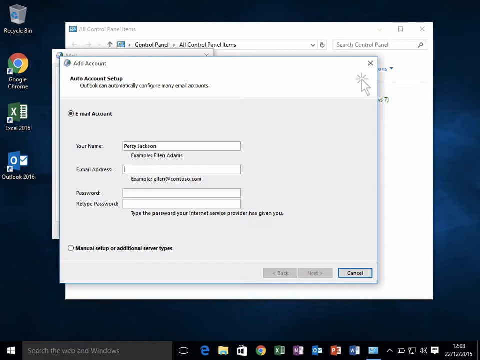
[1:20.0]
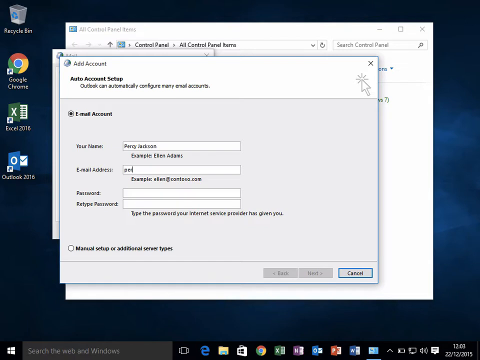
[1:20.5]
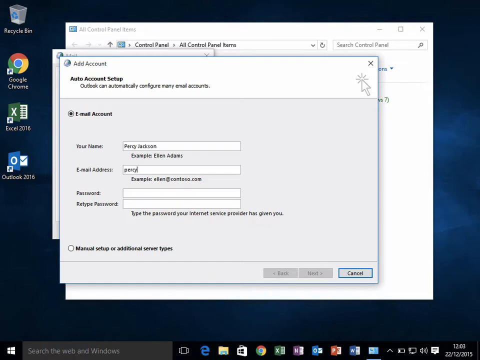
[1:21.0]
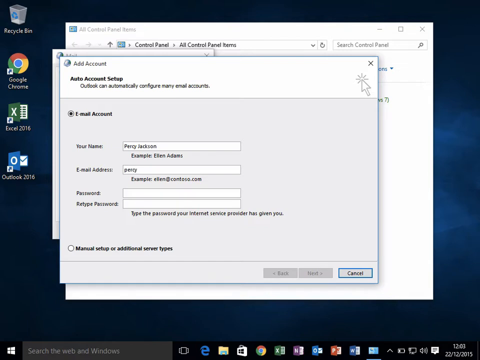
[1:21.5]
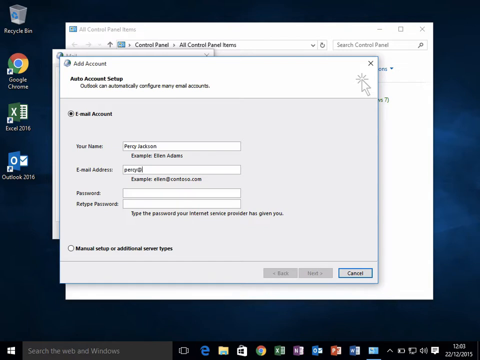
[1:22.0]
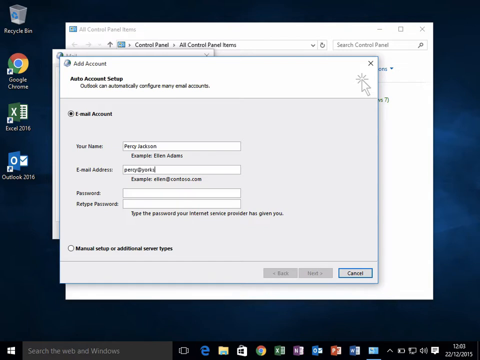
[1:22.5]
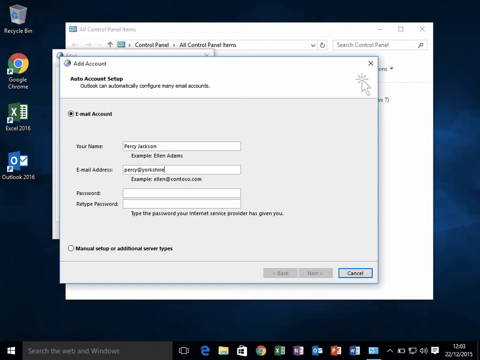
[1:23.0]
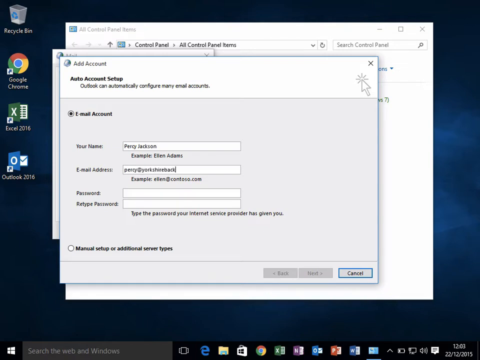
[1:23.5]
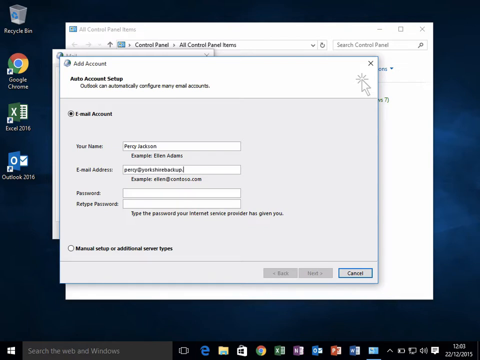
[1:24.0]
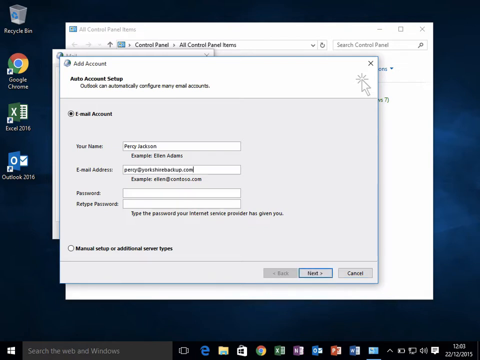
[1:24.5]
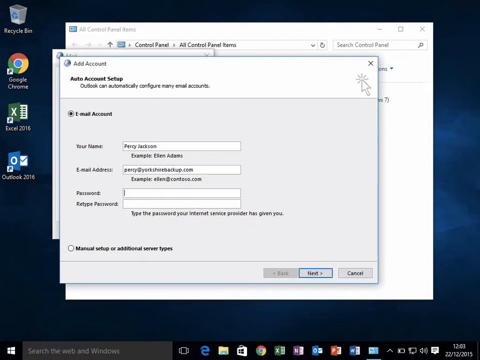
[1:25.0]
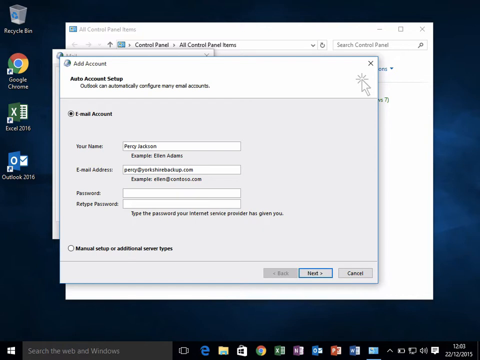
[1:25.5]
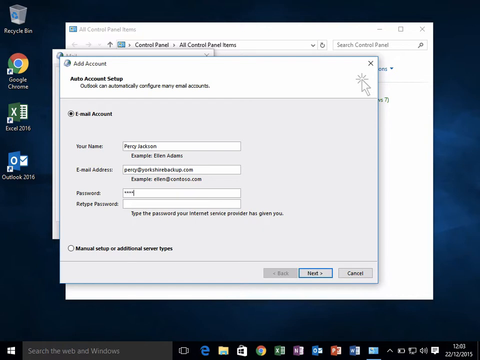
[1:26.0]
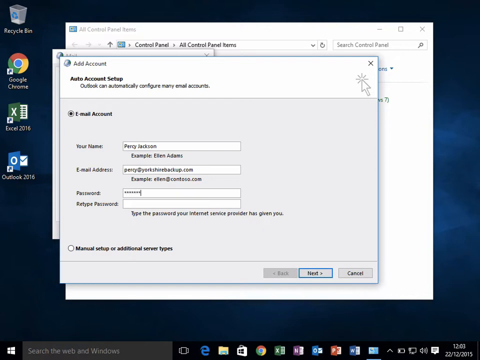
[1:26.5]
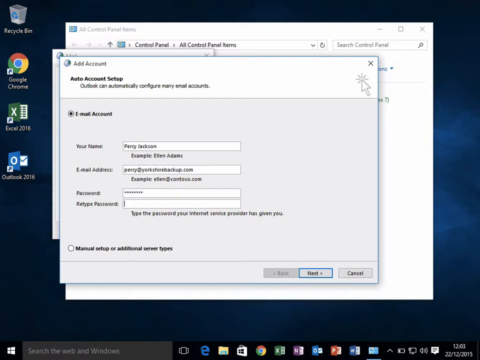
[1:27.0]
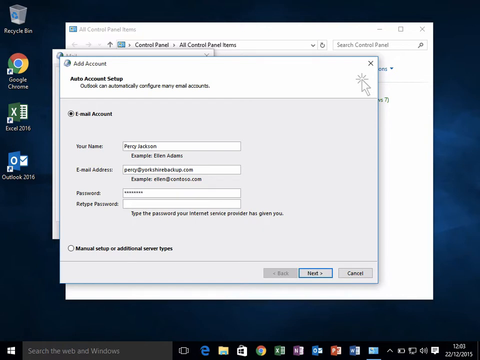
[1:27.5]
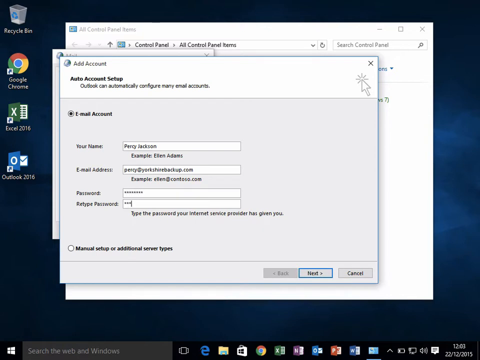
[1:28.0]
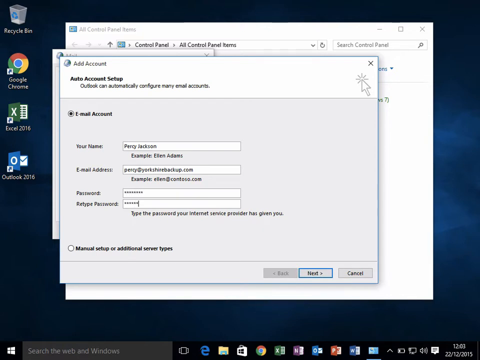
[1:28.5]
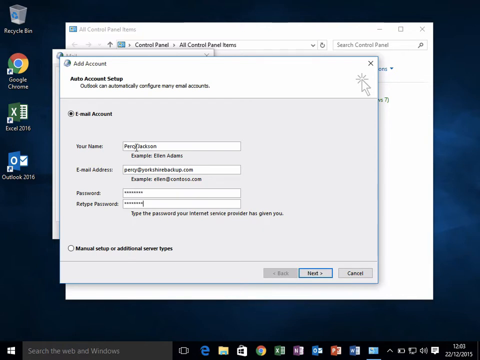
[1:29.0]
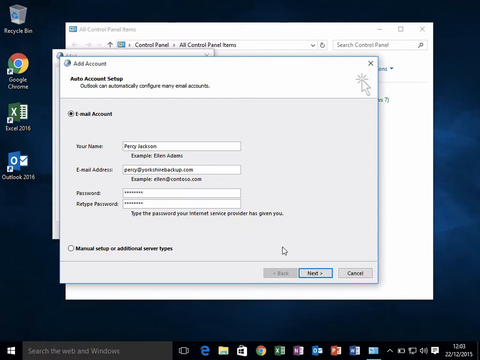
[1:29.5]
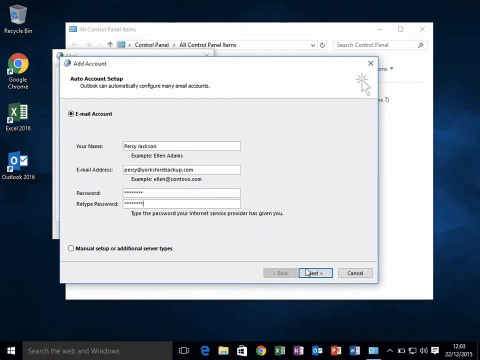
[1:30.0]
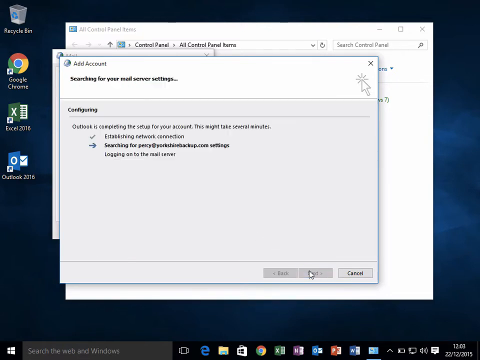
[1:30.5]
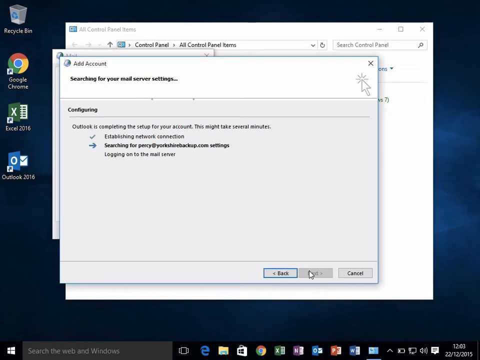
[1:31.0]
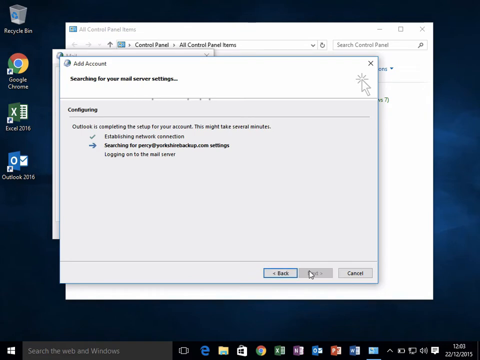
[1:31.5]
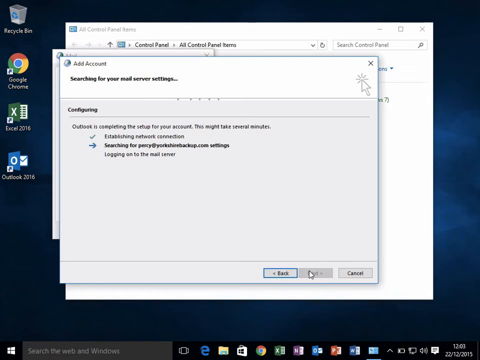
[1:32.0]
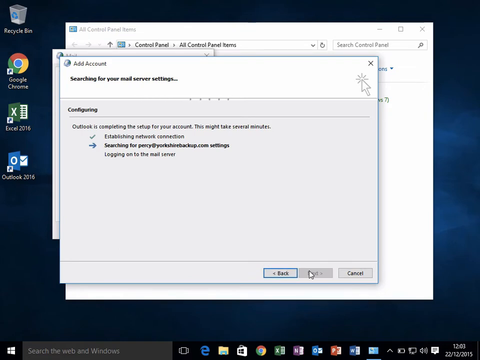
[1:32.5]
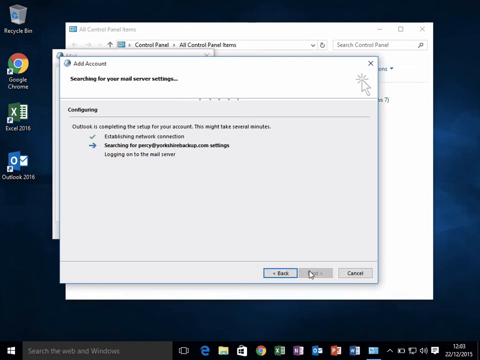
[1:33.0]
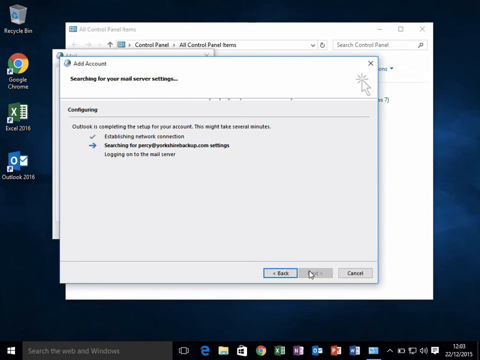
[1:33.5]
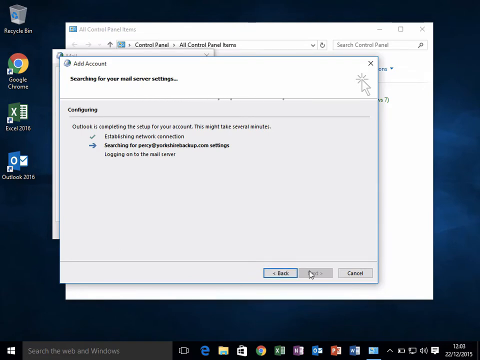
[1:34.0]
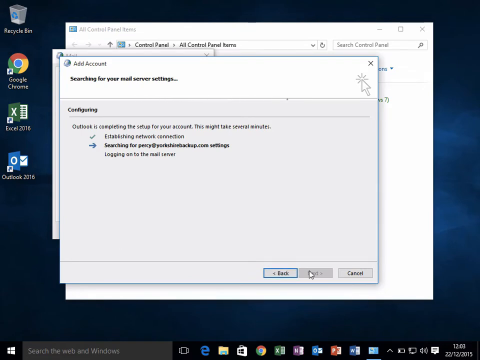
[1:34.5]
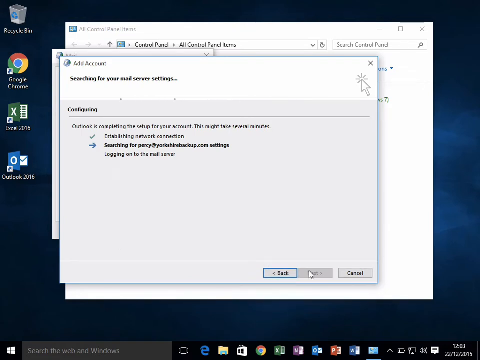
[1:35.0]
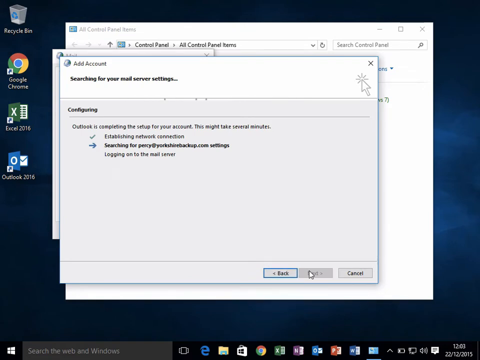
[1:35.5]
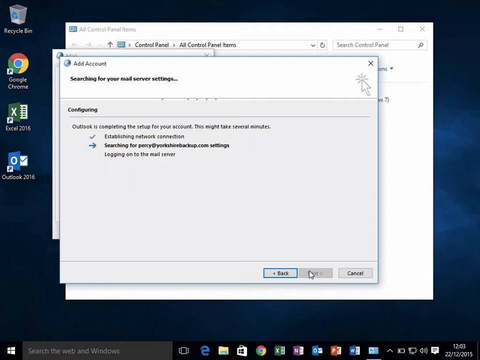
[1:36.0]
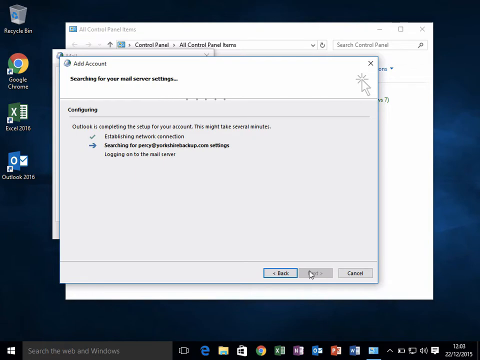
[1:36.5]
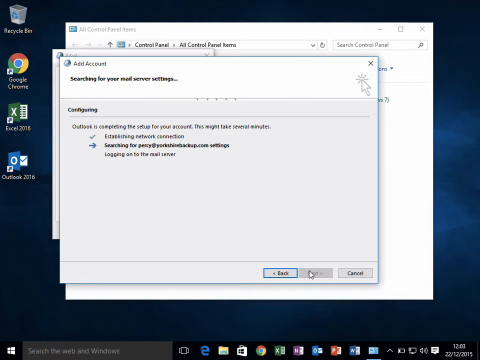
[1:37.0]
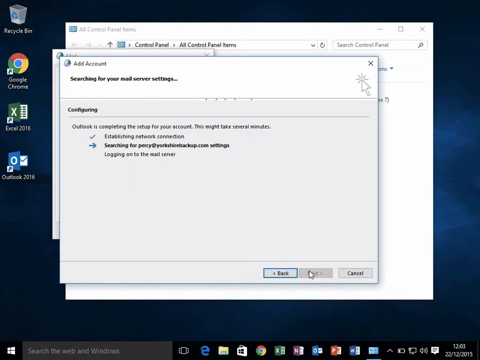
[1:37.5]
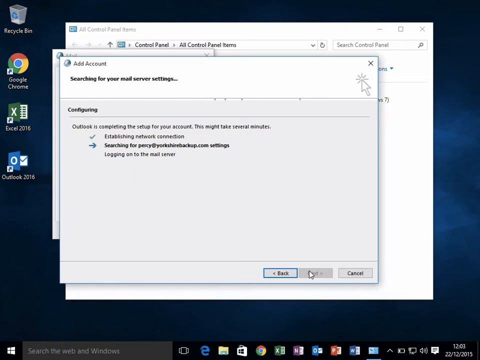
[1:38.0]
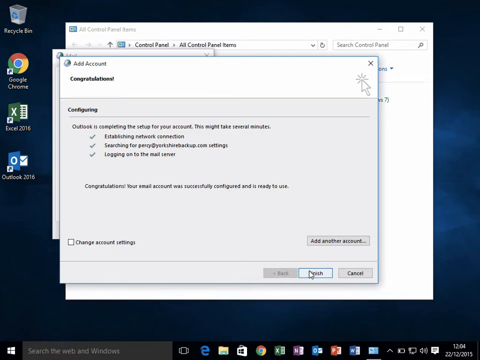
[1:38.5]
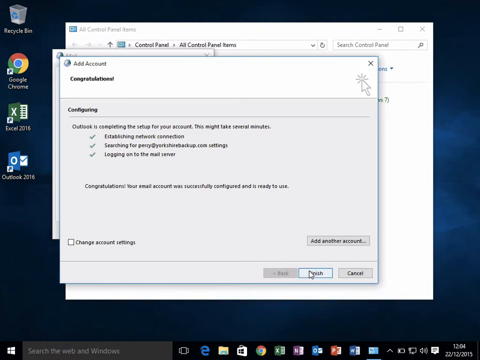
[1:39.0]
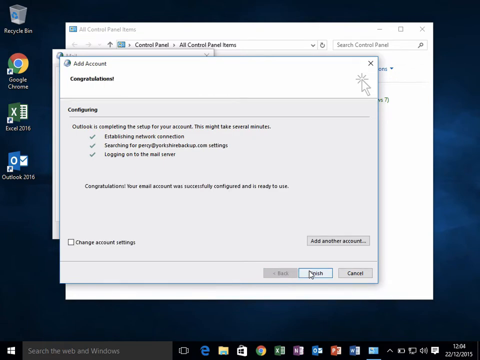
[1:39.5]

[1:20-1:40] After the name, the user goes to the second text box and types in an email address. The pointer moves down to the third text box and the user enters a password, which is hidden by a row of asterisk symbols. In the fourth text box, the user retypes the password, entering the same number of asterisks. The pointer moves to the bottom right corner of the window and clicks the next button. Something loads in the top area of the window, with dots moving from left to right, and the page says "configuring". A notification then appears in the middle saying "congratulations, your email account was successfully configured and is ready to use". The user moves the pointer to a finish button in the bottom right corner.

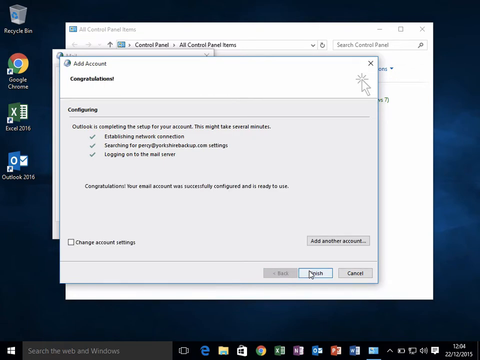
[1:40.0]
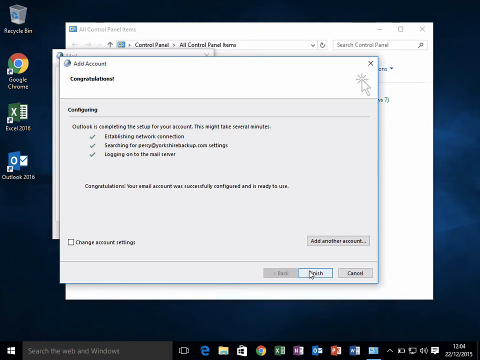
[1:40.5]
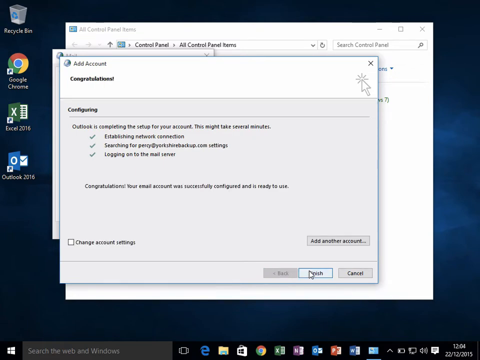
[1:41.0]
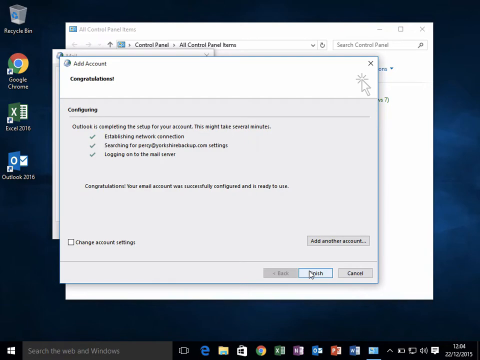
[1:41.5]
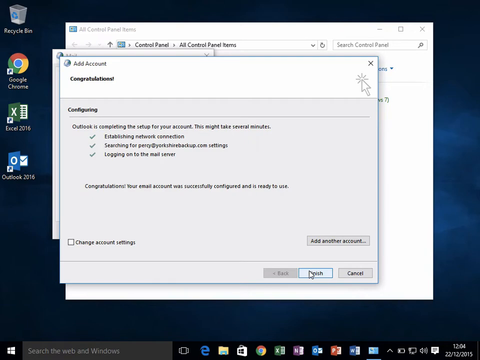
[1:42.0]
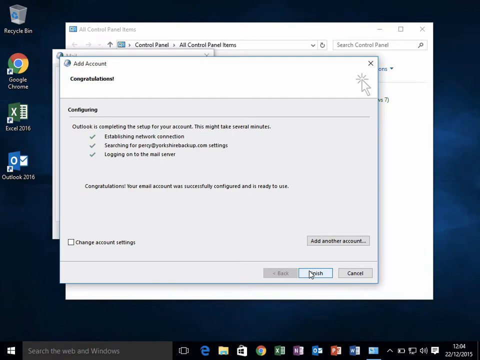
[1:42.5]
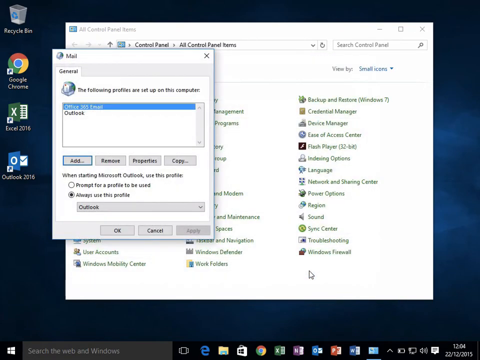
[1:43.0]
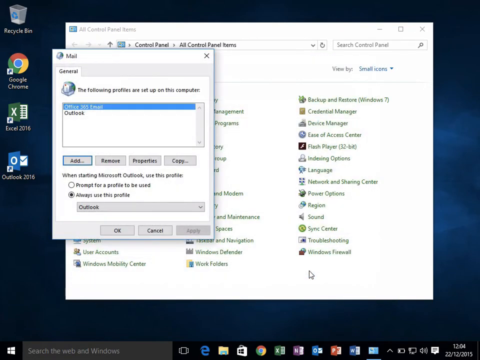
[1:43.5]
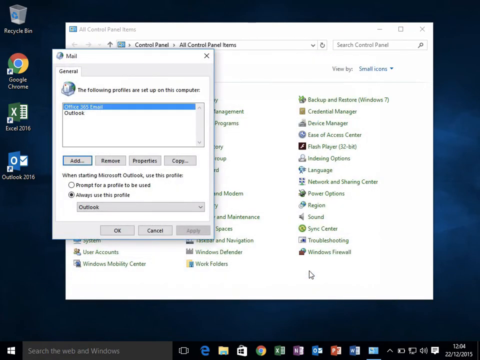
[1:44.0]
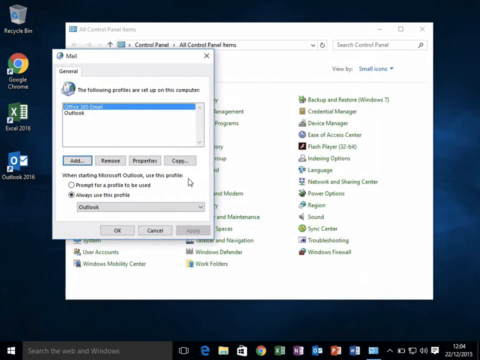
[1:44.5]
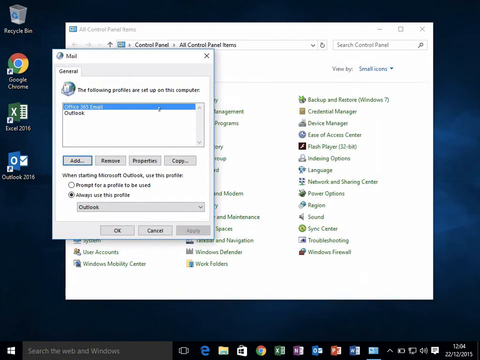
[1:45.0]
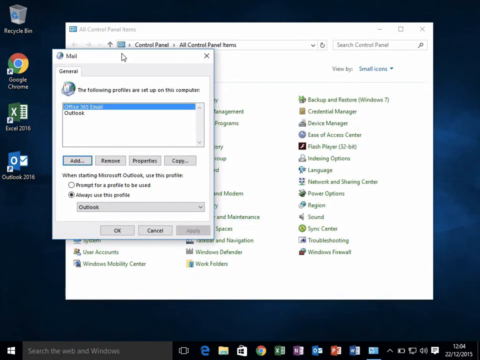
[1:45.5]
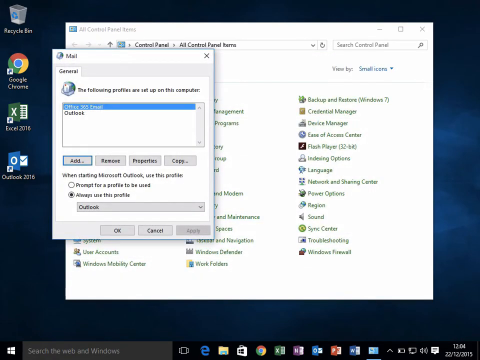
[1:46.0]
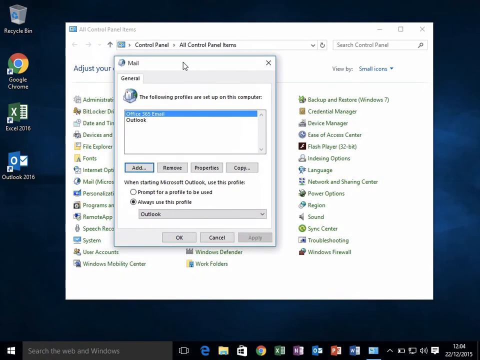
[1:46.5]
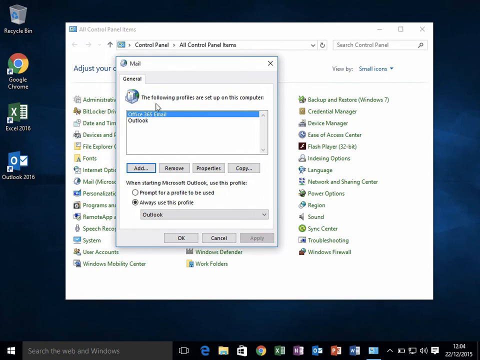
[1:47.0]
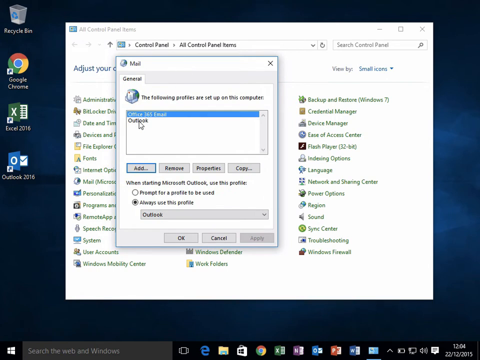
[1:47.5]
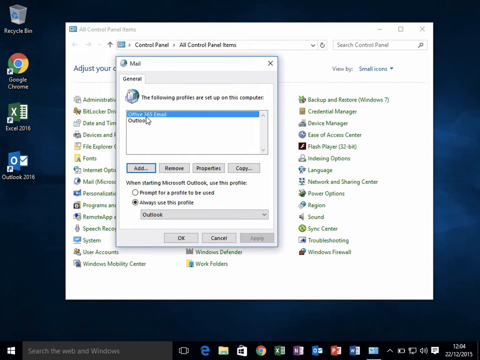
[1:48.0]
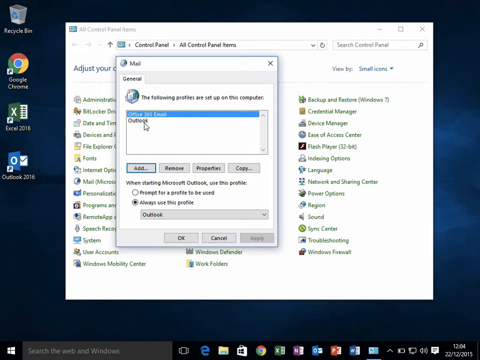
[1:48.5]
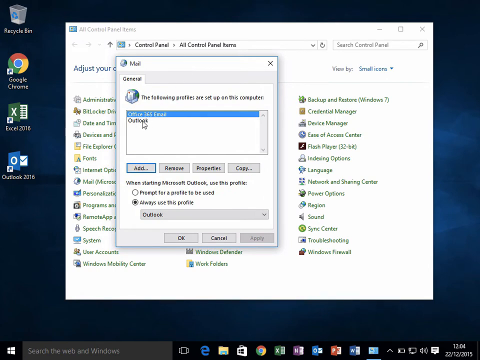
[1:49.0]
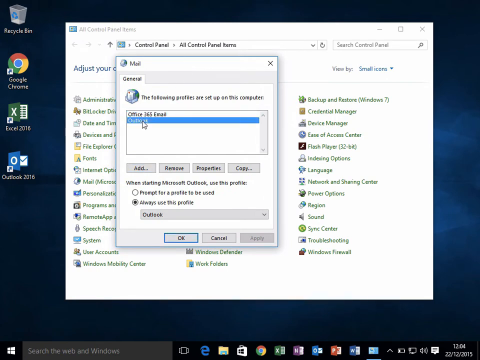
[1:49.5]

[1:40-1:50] The user clicks the finish button, which is between a back button on the left and a cancel button on the right; the back button is disabled and shaded grey. The window disappears, leaving two windows open: a small Mail window in the upper left area and a larger control panel window behind it. The user moves the pointer to the top of the Mail window and drags it slightly to the right, then clicks Outlook, which is highlighted blue.